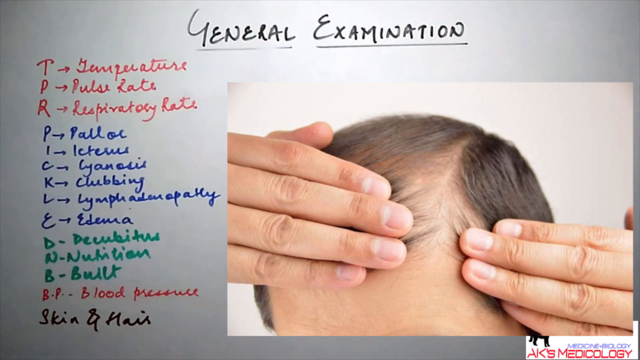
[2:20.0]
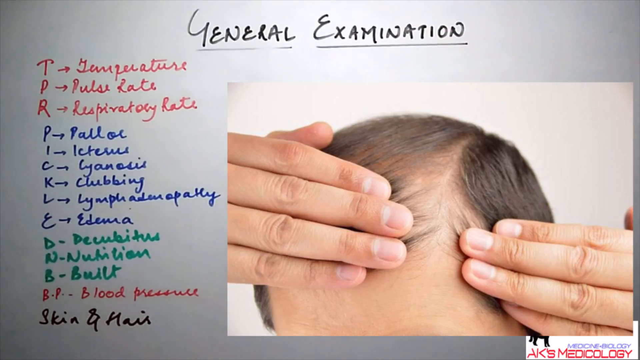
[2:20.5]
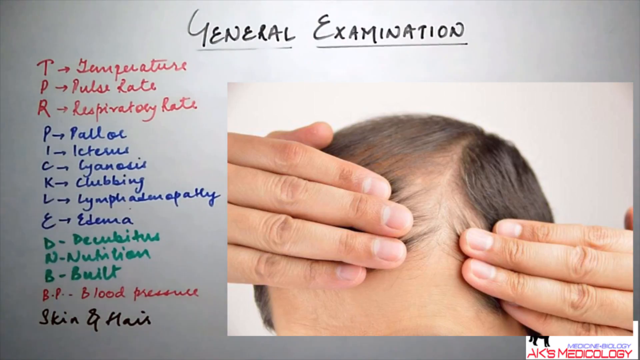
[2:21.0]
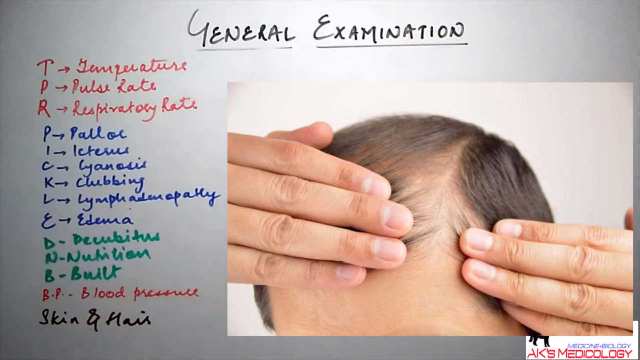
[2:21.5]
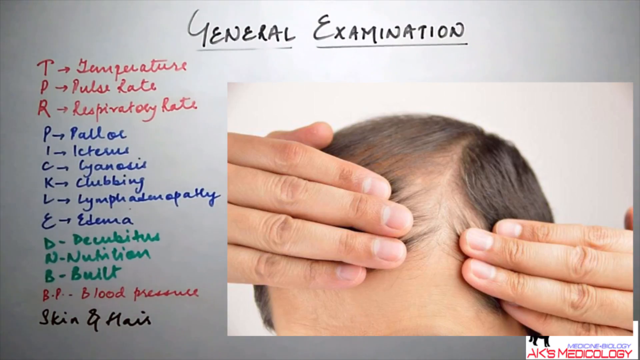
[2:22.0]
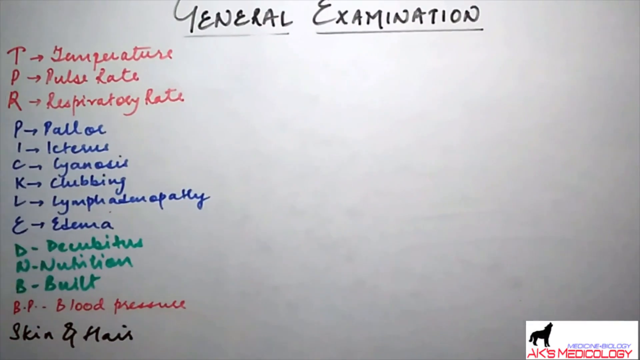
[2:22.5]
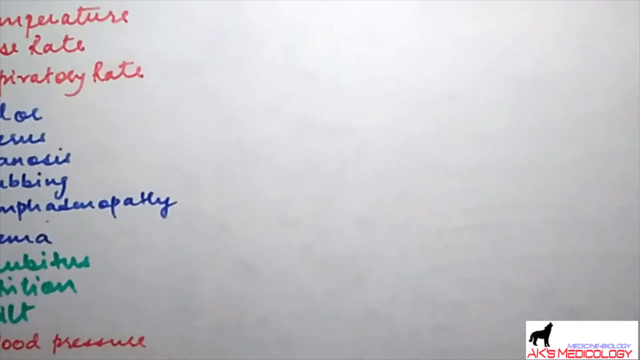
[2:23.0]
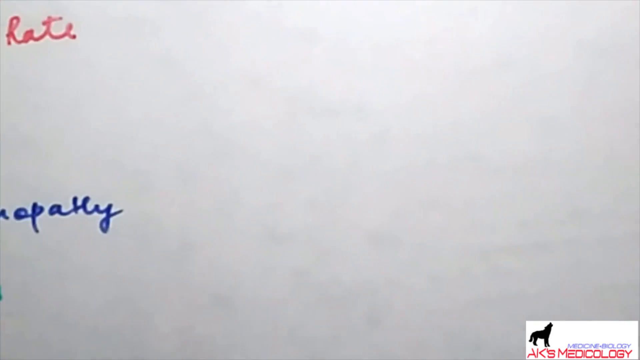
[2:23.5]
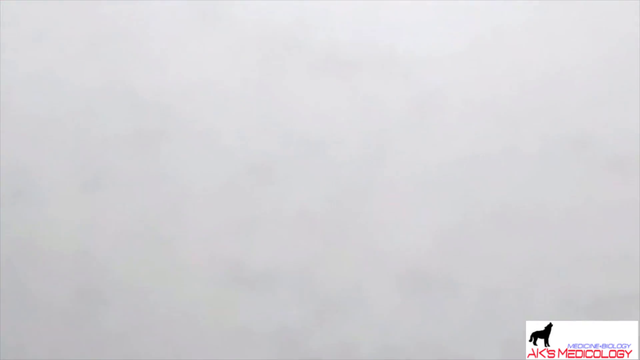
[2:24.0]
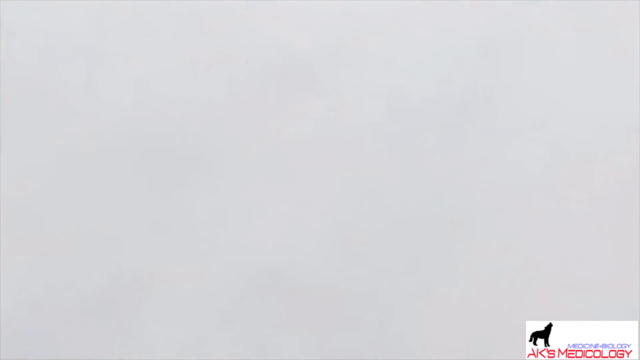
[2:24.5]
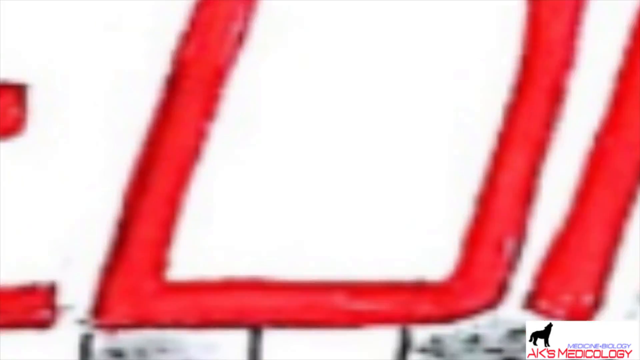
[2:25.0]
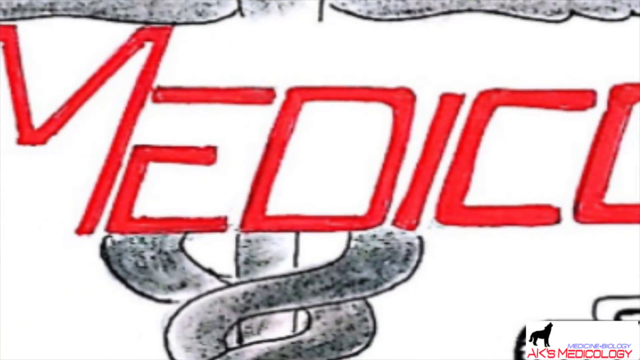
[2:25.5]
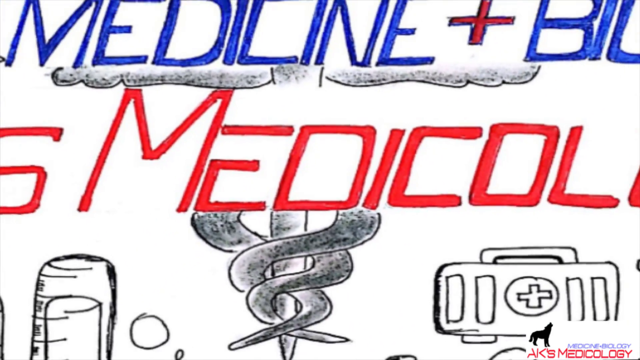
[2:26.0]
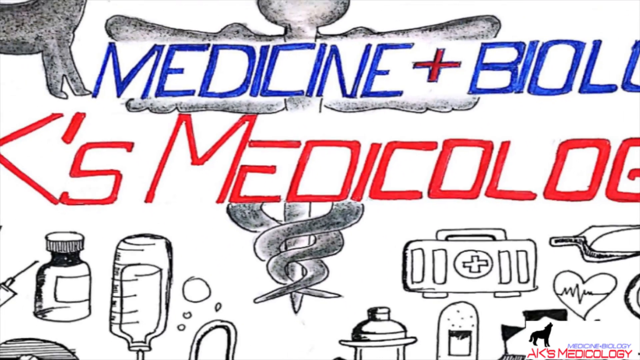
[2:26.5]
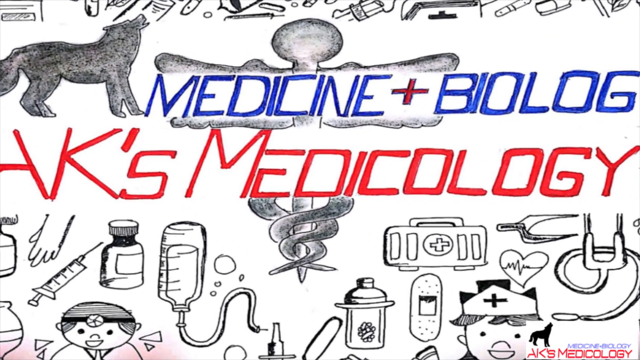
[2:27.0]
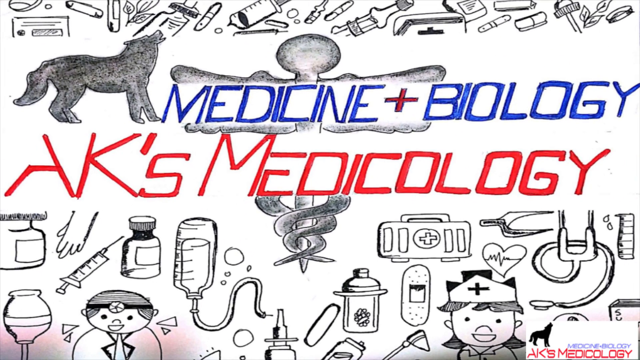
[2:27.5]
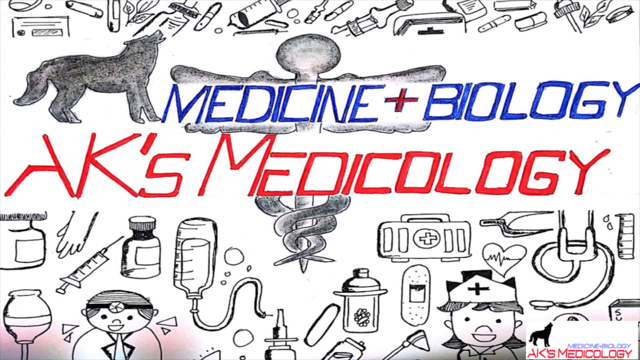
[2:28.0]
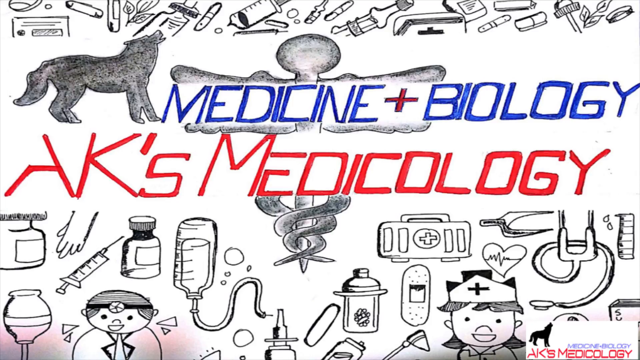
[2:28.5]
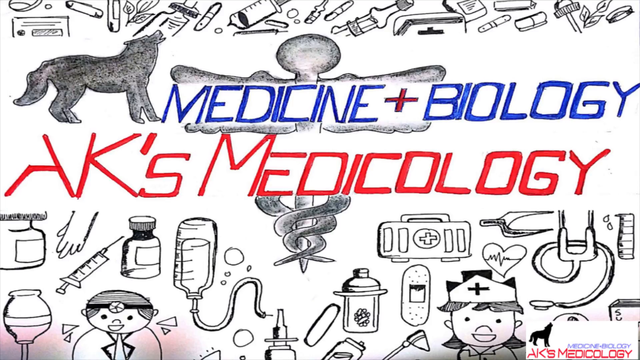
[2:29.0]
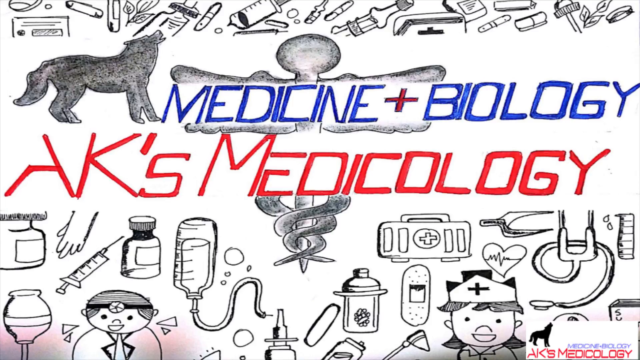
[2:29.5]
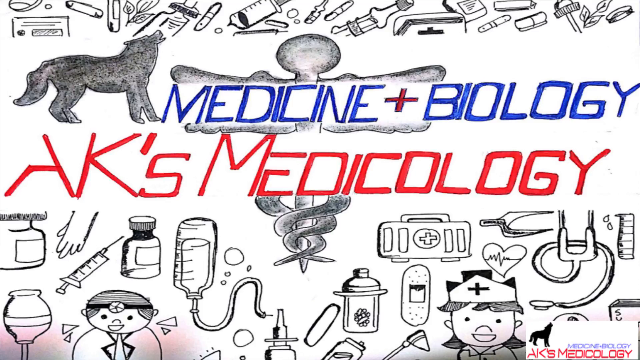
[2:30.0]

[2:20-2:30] The whiteboard with the words "general examination" is shown, and the video then cuts to a scene with "medicine plus biology" written in bold capital letters in red and blue; the words "medicine" and "biology" are in blue and the rest is in red. Pictures on this board represent medical things: a syringe, a pill bottle, a heart monitor, a band-aid, a coyote, a cassette tape, a nurse with a hat on, gloves, a stethoscope, cotton balls and q-tips.